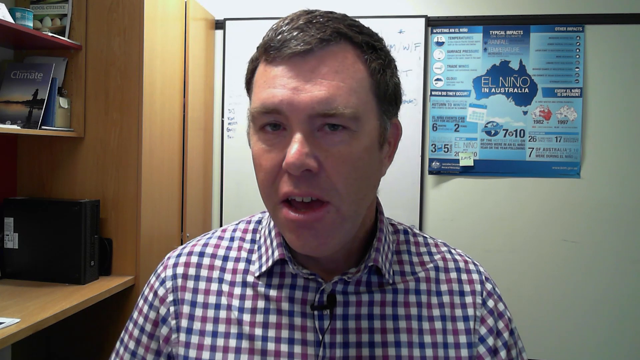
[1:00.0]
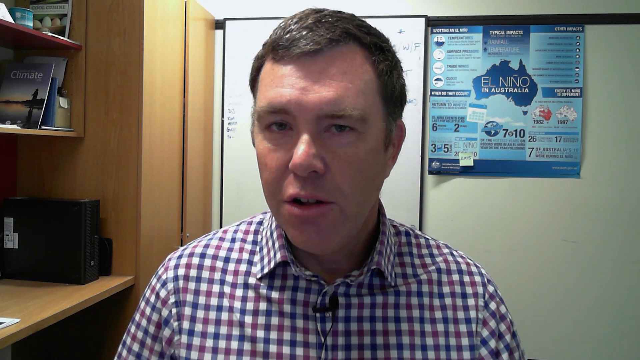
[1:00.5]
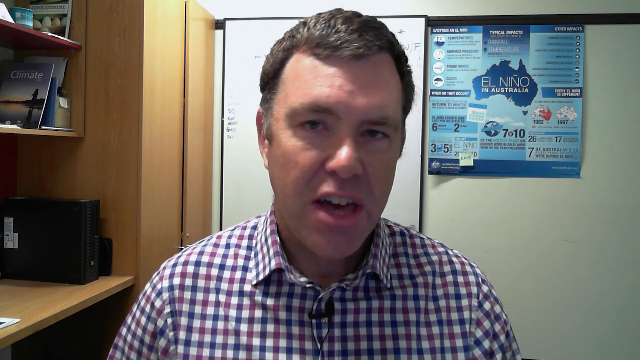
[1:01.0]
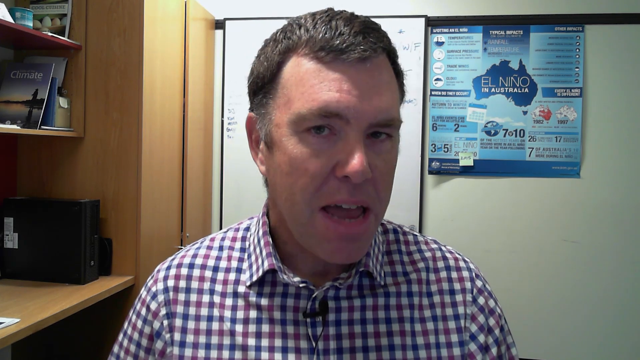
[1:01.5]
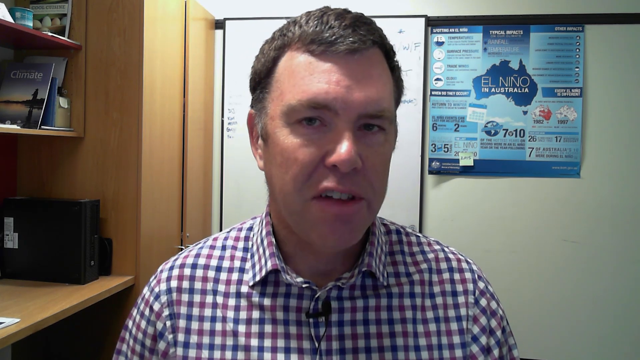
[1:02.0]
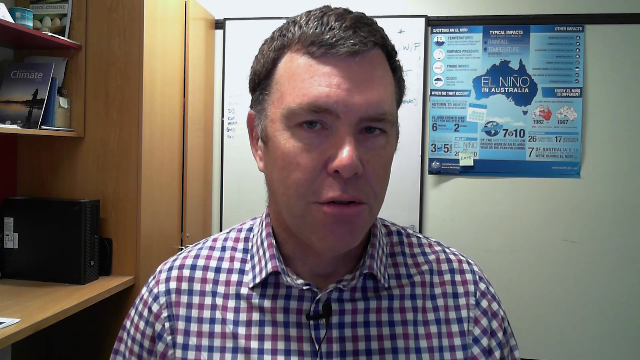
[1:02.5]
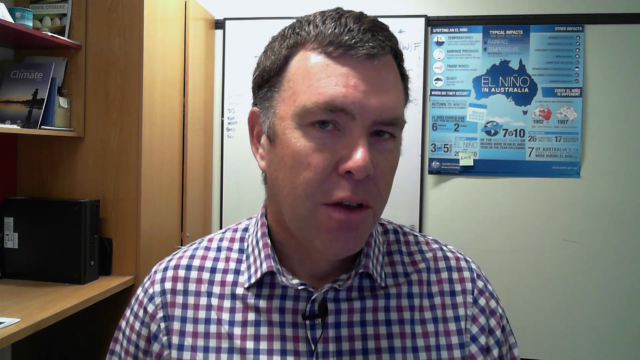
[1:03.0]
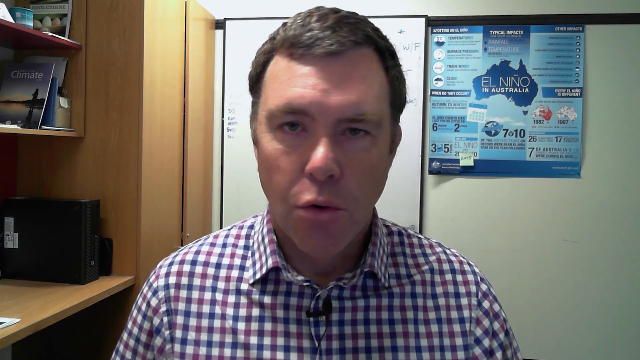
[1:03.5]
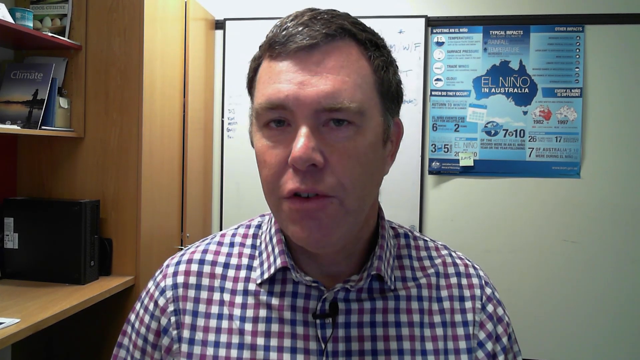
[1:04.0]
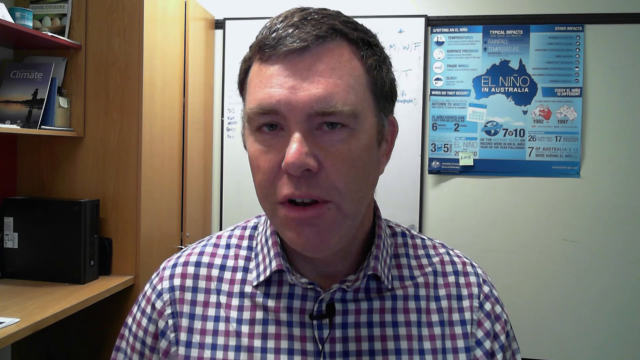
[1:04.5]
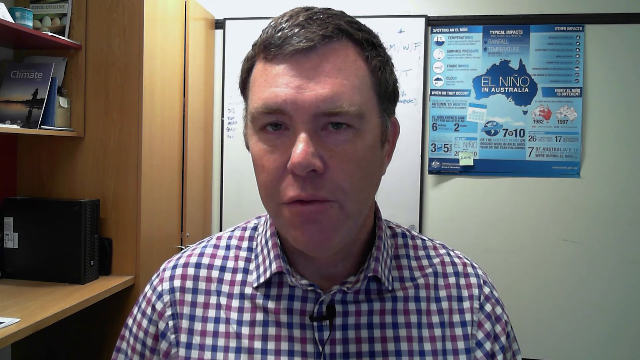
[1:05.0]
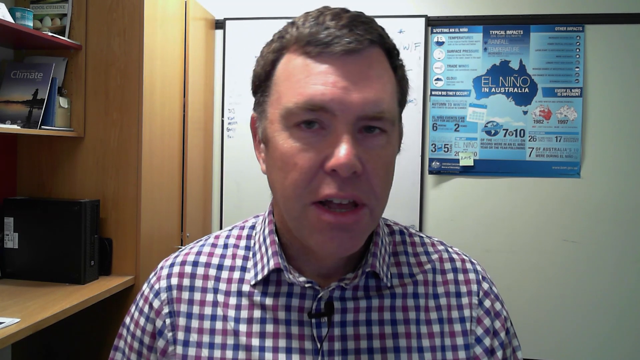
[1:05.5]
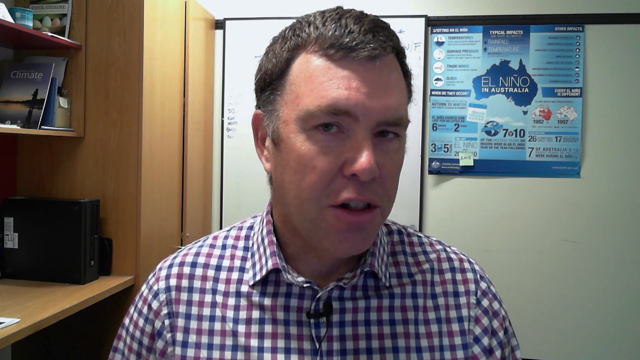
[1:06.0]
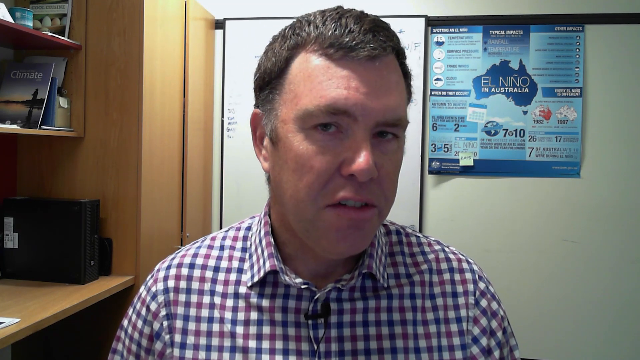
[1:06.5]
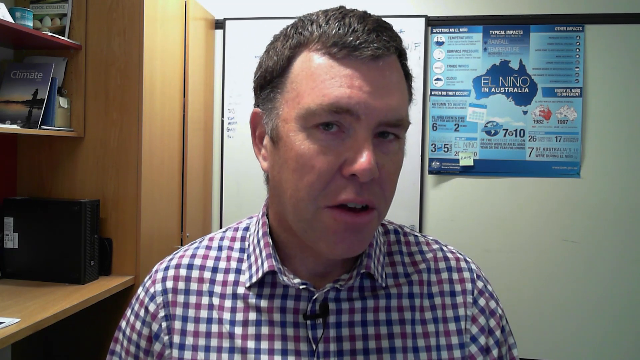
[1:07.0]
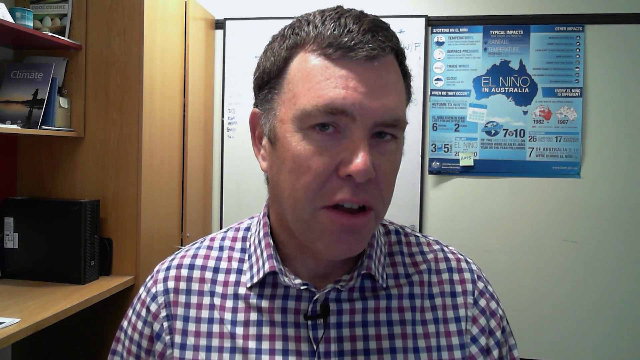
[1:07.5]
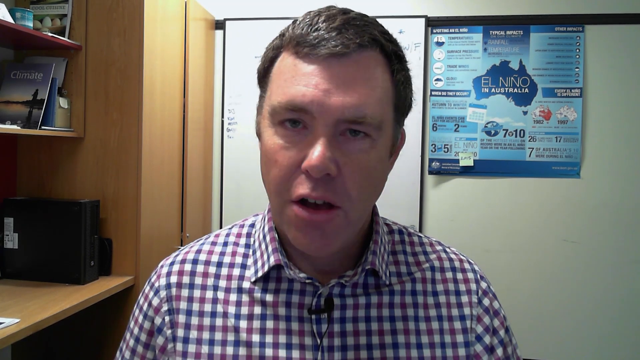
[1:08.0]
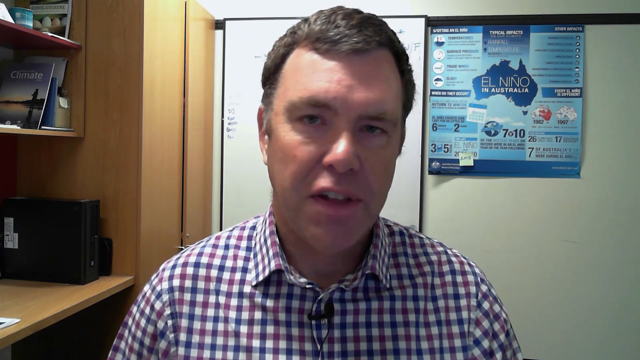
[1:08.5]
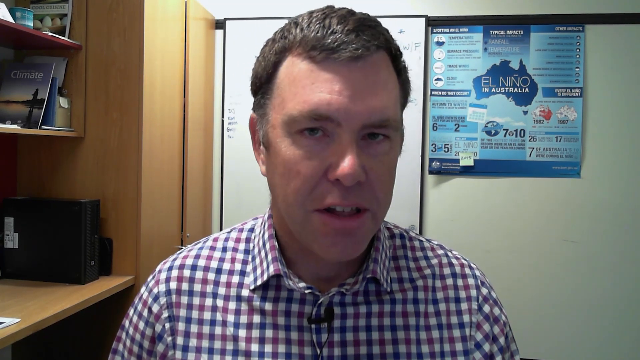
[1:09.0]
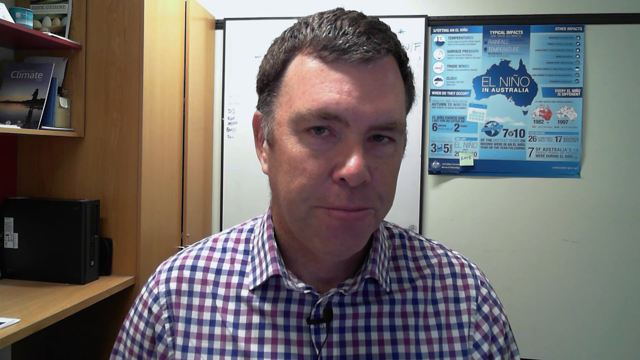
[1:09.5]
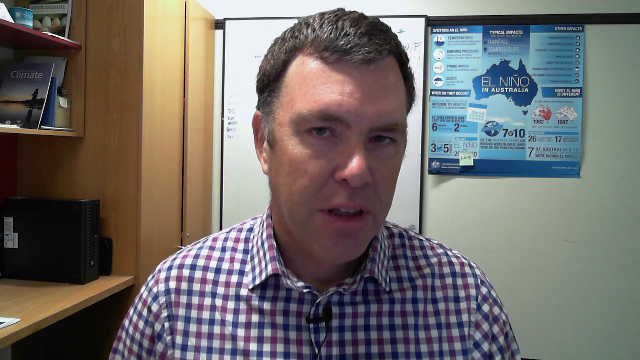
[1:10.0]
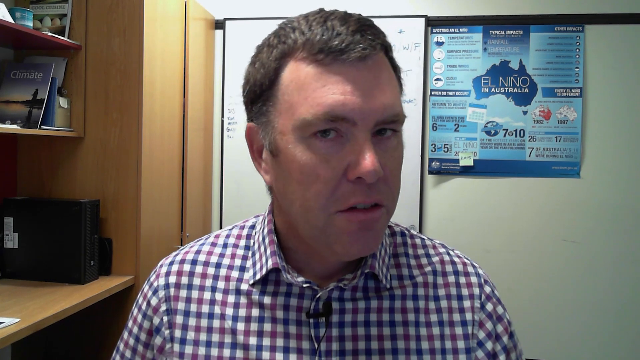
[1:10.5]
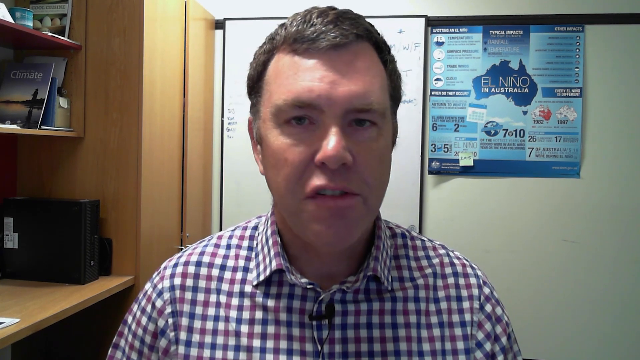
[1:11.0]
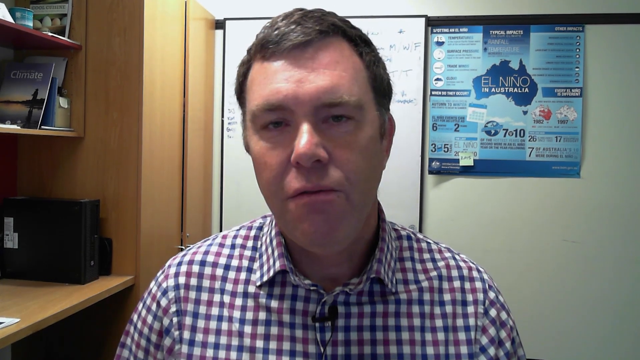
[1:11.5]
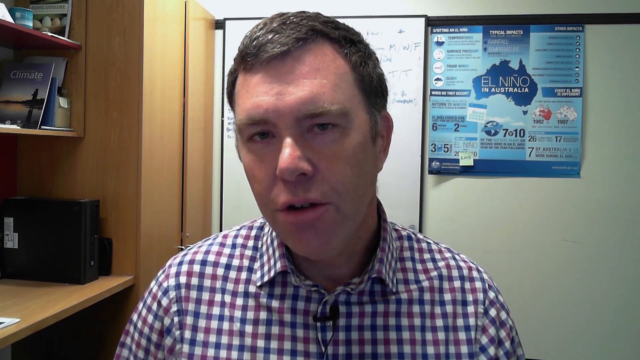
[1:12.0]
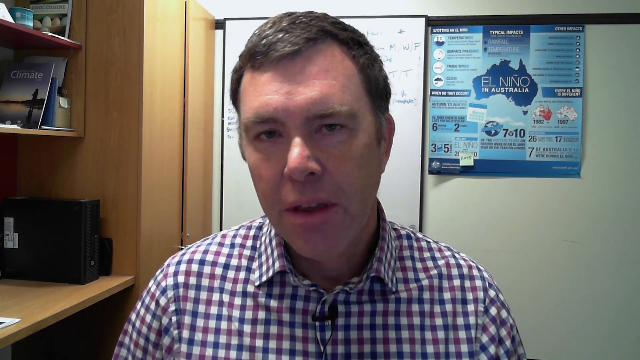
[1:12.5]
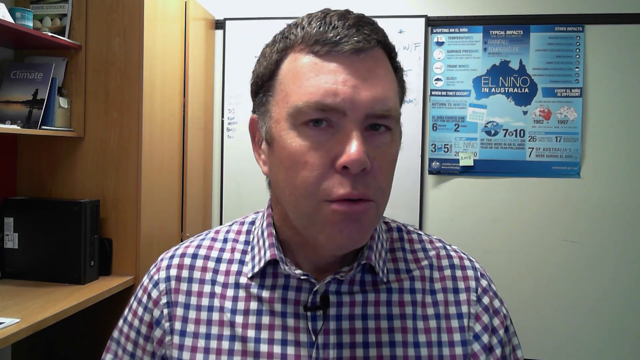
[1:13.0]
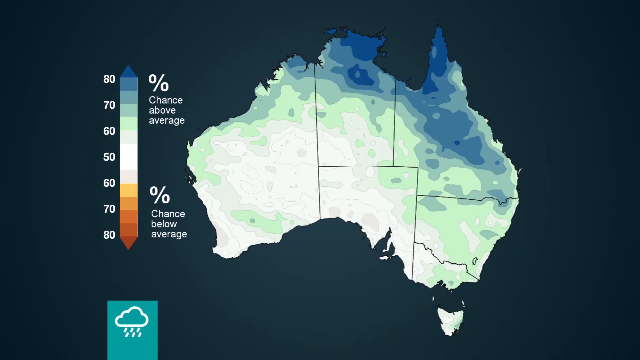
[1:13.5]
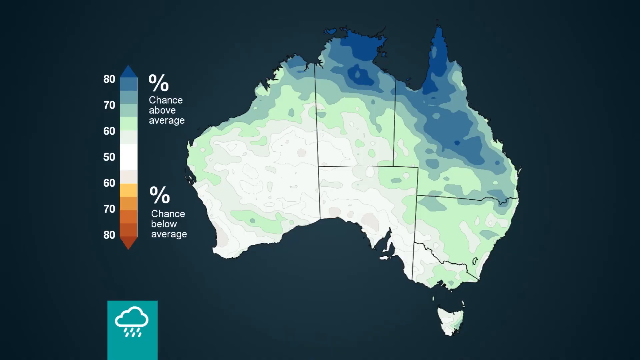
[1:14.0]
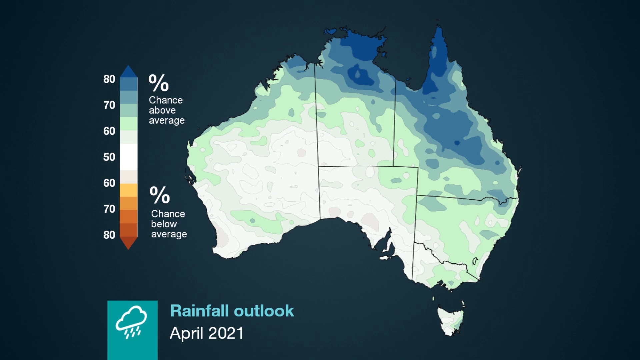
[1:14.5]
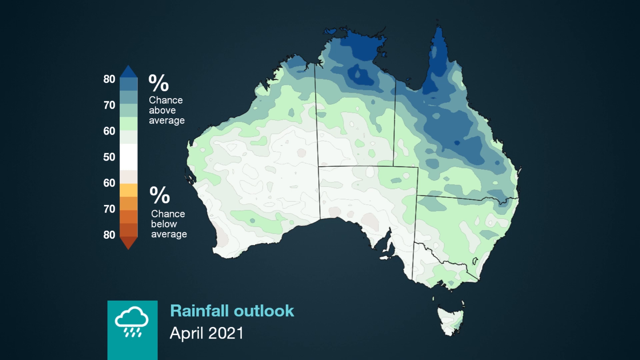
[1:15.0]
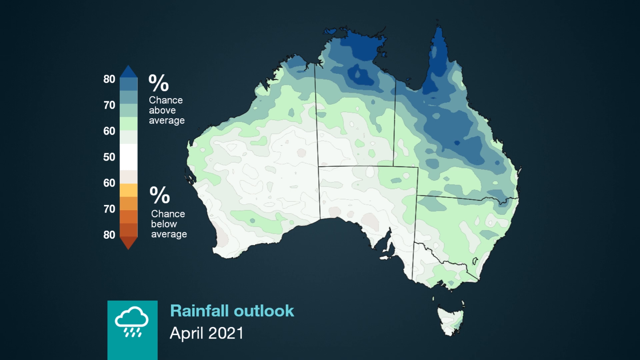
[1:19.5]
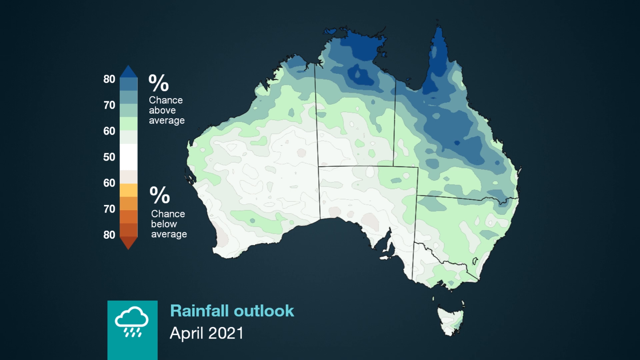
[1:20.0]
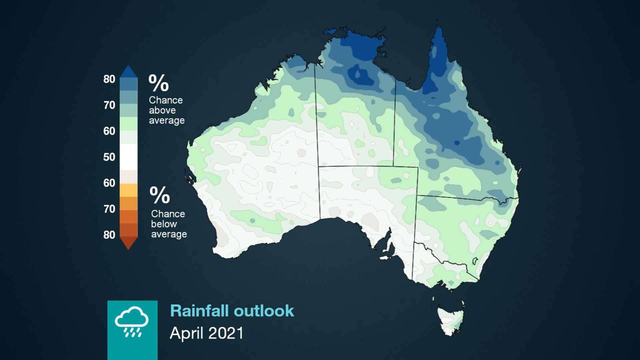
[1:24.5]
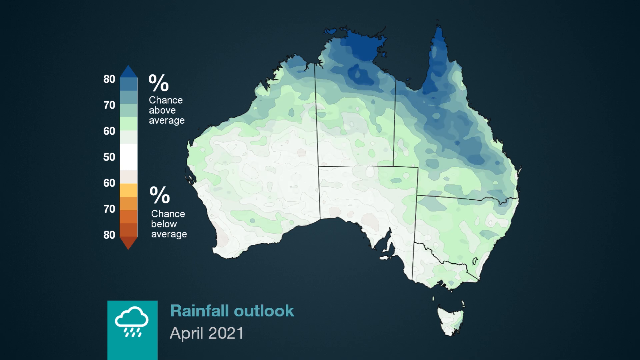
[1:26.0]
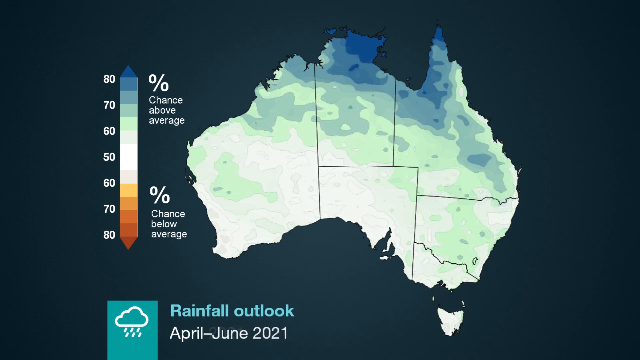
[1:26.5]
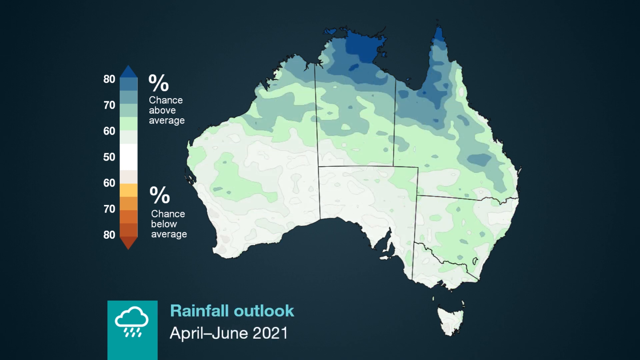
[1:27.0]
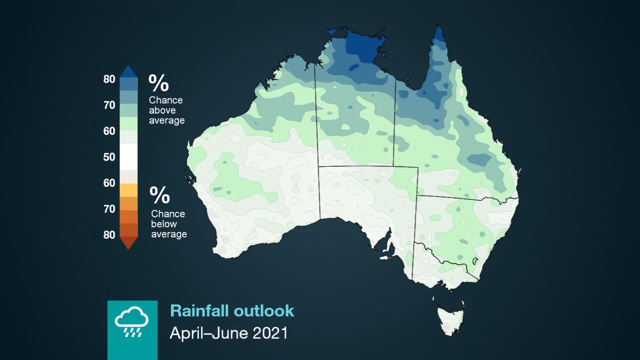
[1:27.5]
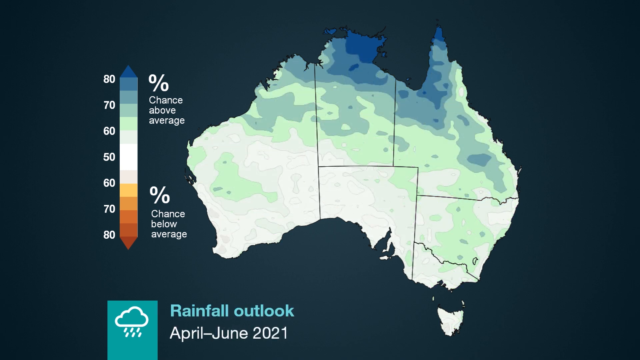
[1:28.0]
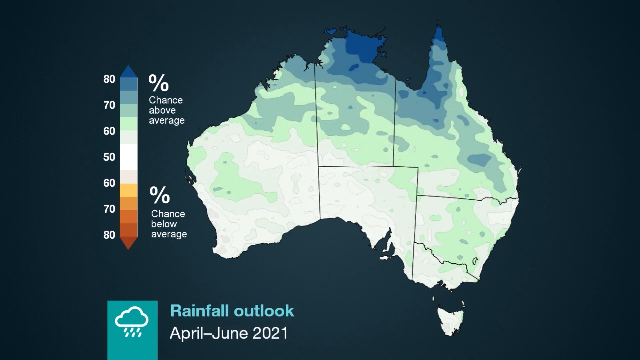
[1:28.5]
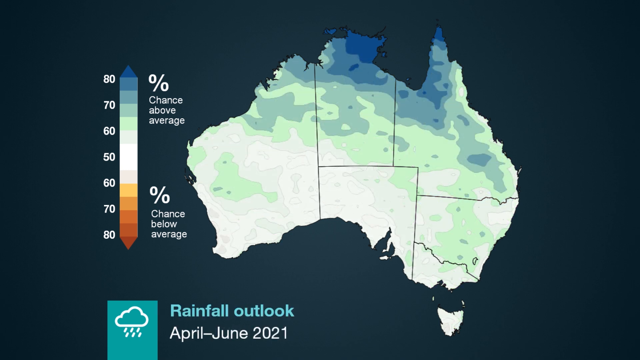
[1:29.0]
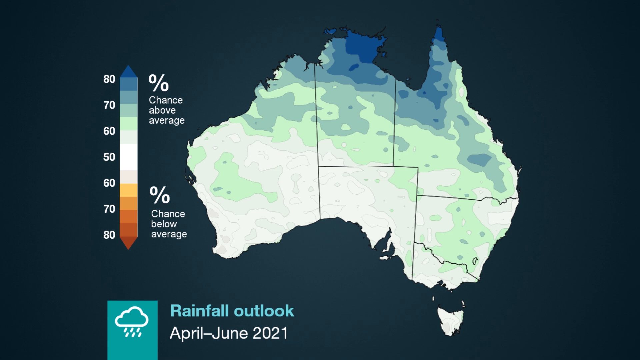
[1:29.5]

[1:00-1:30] The climatologist speaks to the camera, wearing a white, navy and purple checked shirt with a small microphone attached to the front. He has quite short hair and seems to be in his office. A brown cabinet is to the left behind him, along with some shelving, a whiteboard and a poster. He moves his neck from side to side as he speaks. The video then transitions to a map of Australia showing the rainfall outlook for April 2021, with various colours reflecting the scale of expected rainfall. It then changes to the rainfall outlook for April to June 2021, with different areas of the map coloured in.